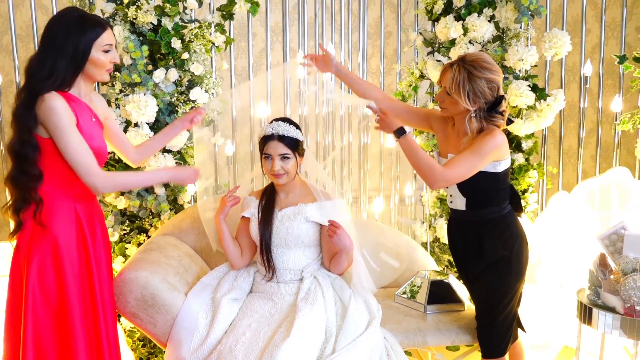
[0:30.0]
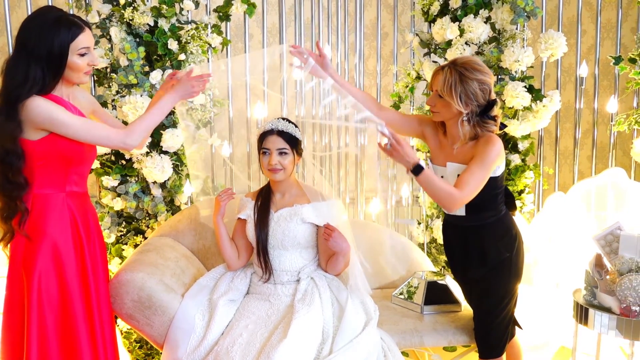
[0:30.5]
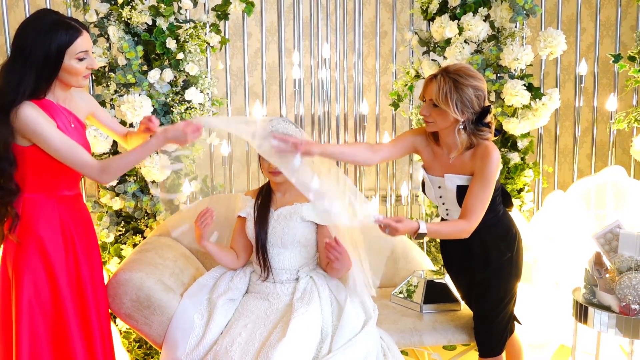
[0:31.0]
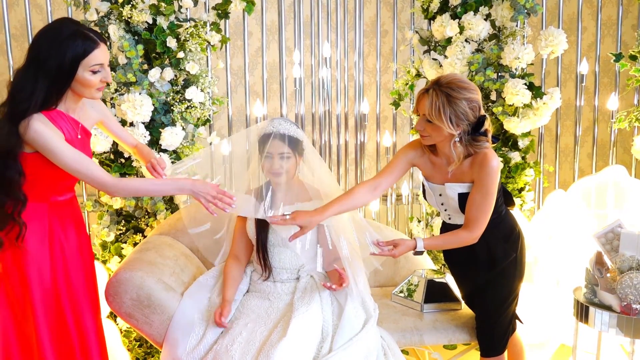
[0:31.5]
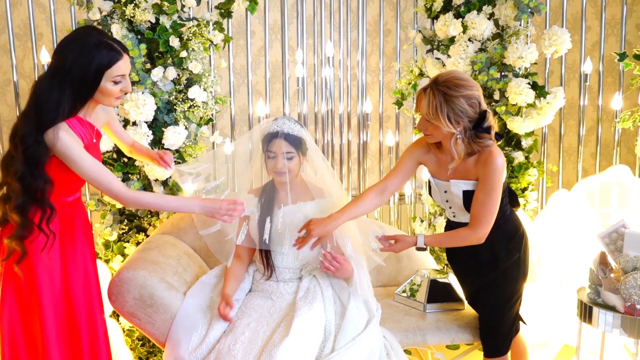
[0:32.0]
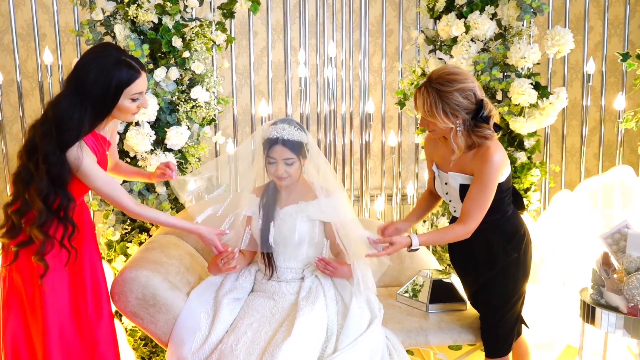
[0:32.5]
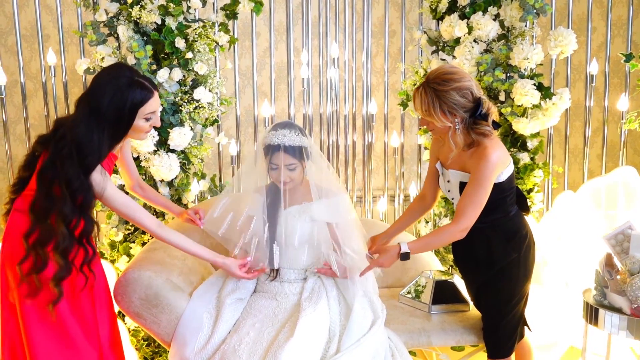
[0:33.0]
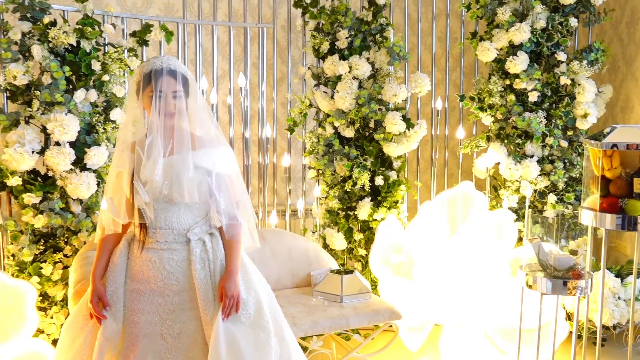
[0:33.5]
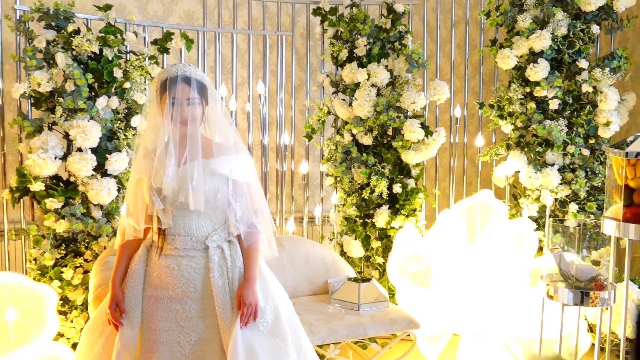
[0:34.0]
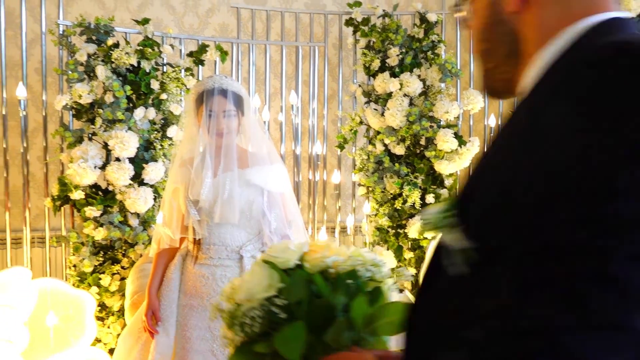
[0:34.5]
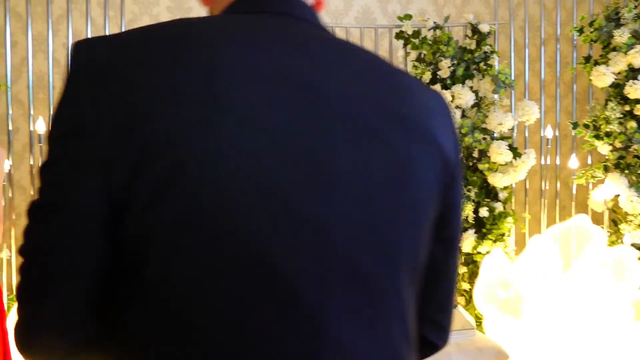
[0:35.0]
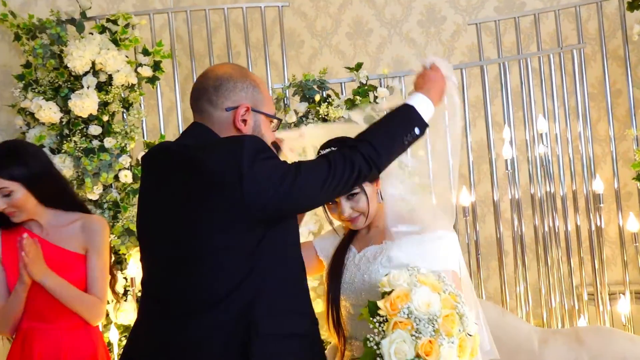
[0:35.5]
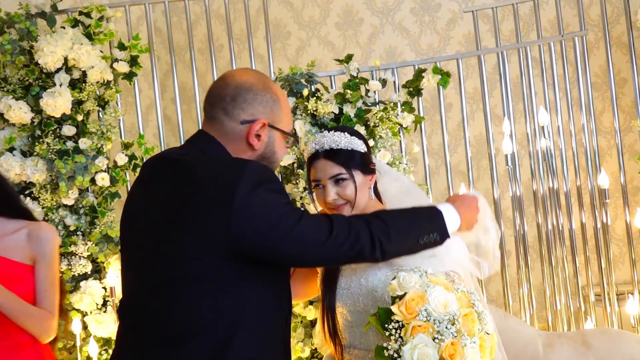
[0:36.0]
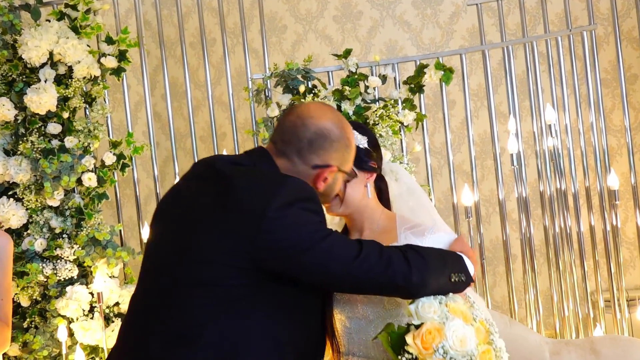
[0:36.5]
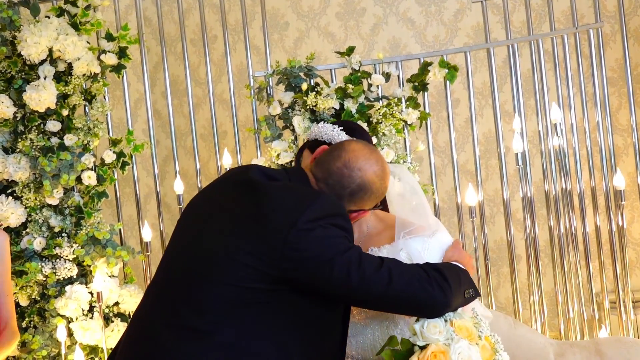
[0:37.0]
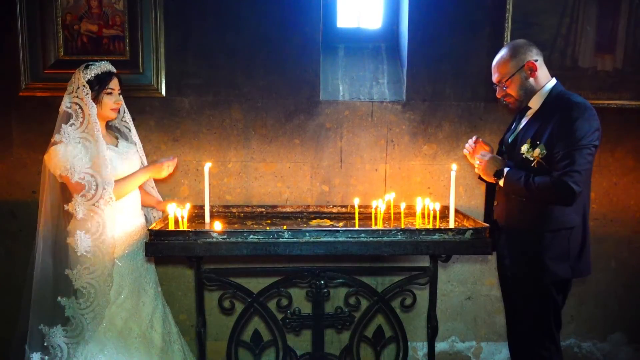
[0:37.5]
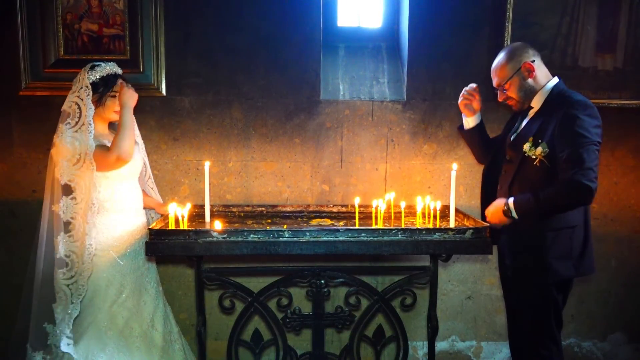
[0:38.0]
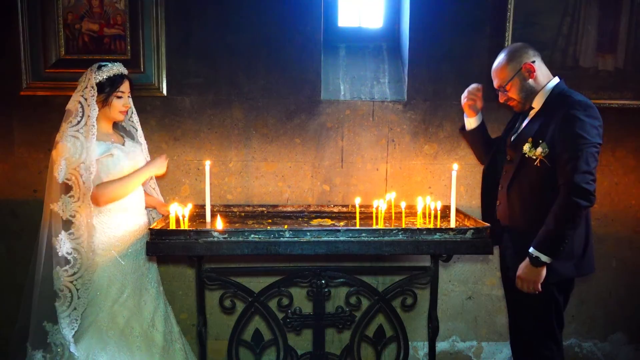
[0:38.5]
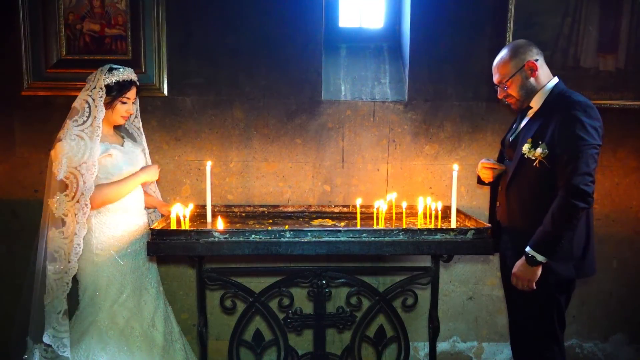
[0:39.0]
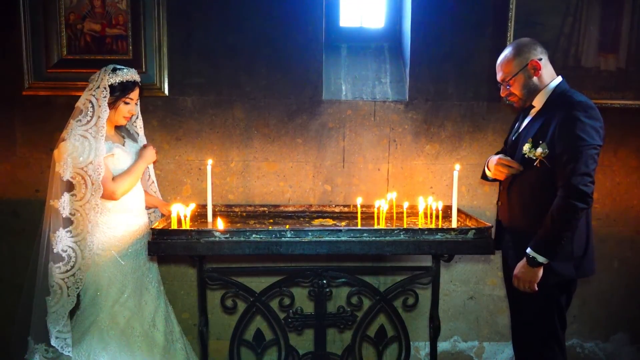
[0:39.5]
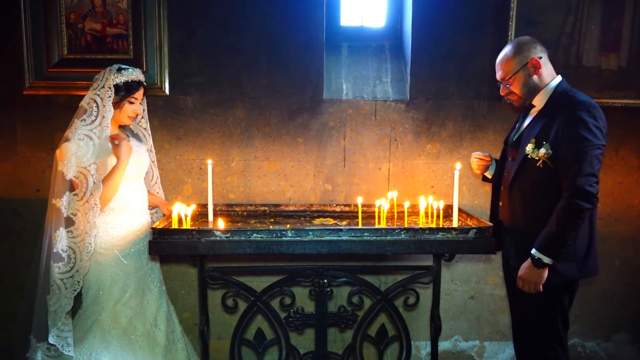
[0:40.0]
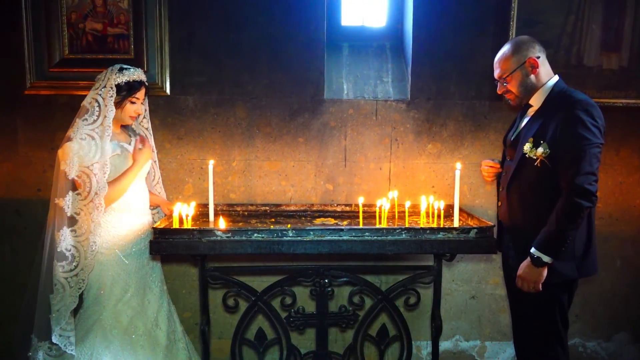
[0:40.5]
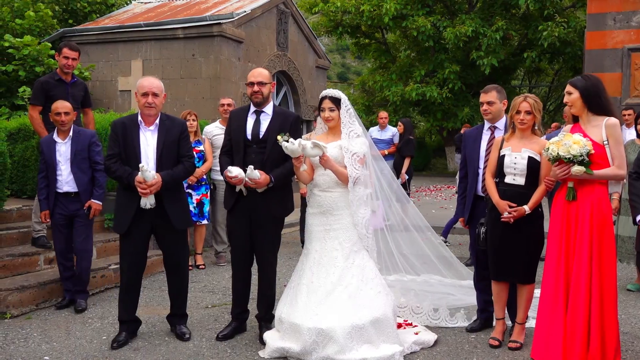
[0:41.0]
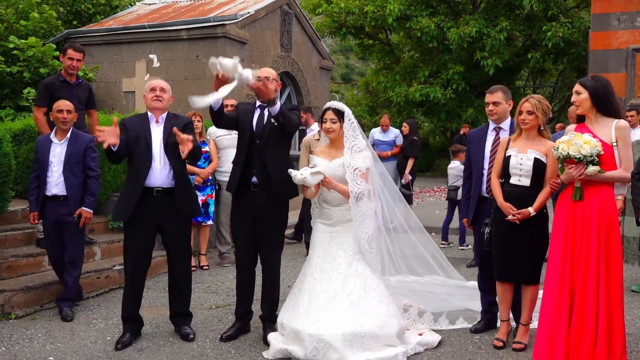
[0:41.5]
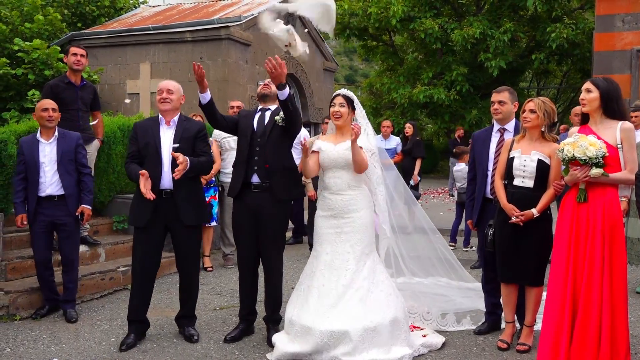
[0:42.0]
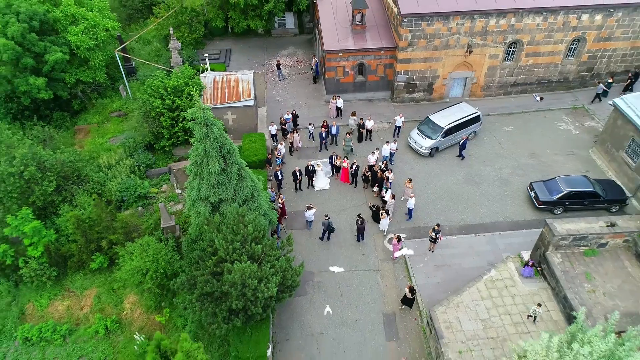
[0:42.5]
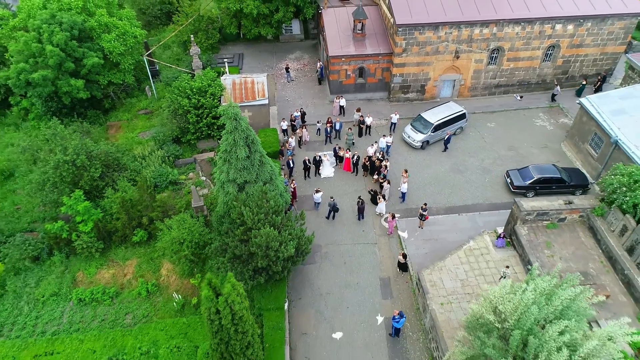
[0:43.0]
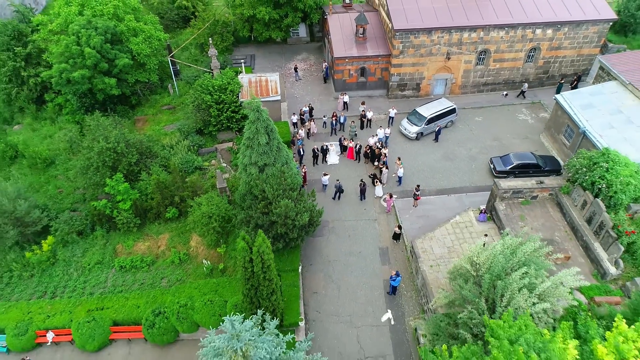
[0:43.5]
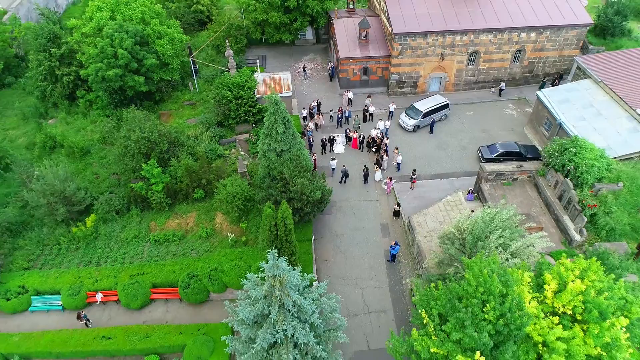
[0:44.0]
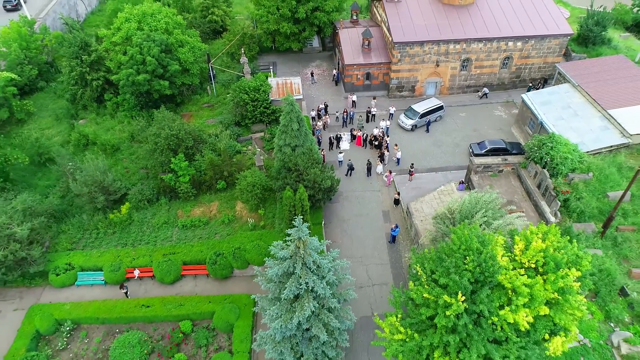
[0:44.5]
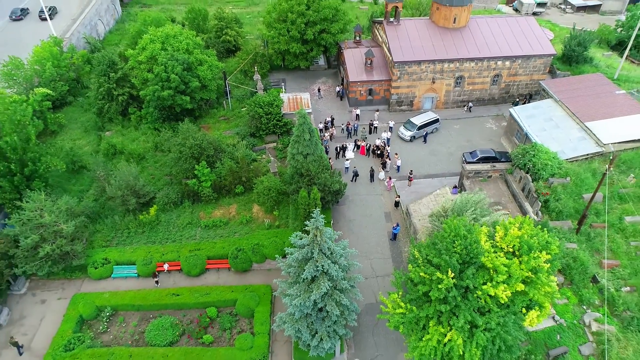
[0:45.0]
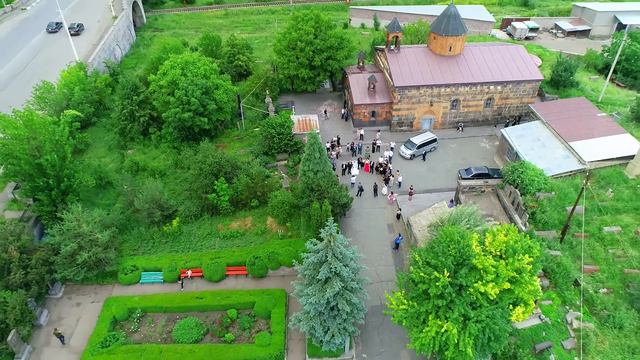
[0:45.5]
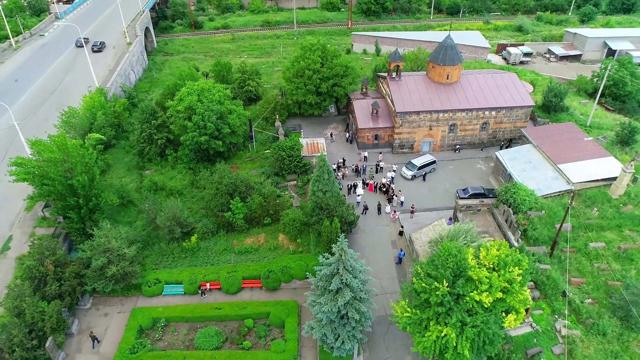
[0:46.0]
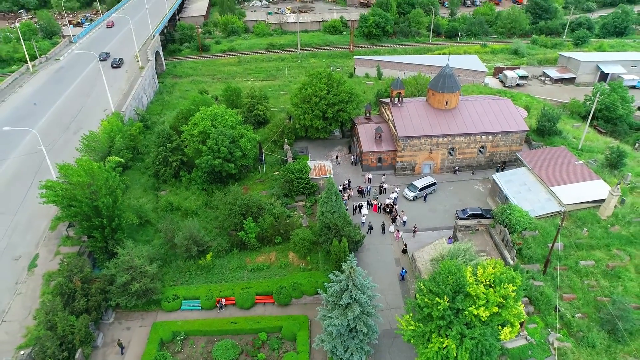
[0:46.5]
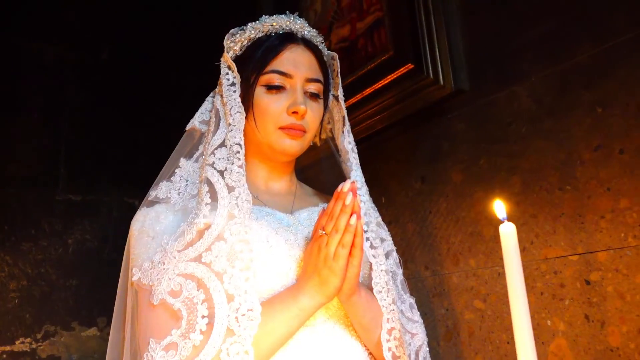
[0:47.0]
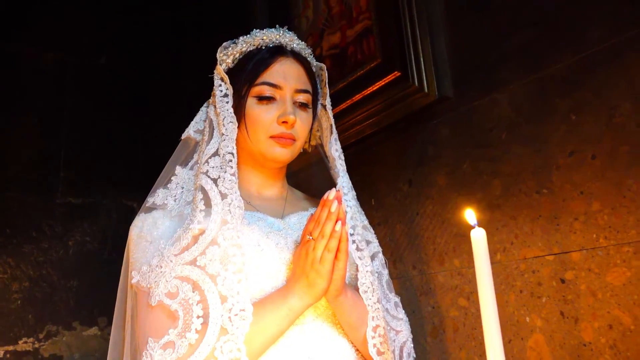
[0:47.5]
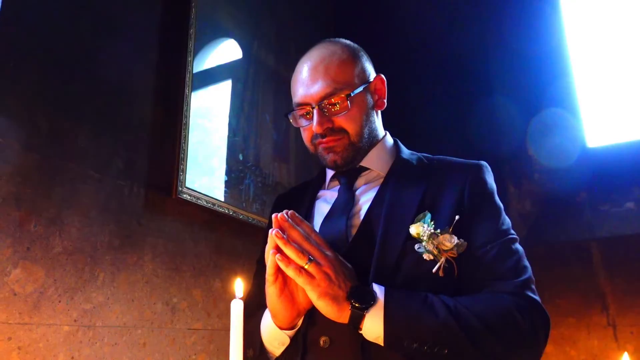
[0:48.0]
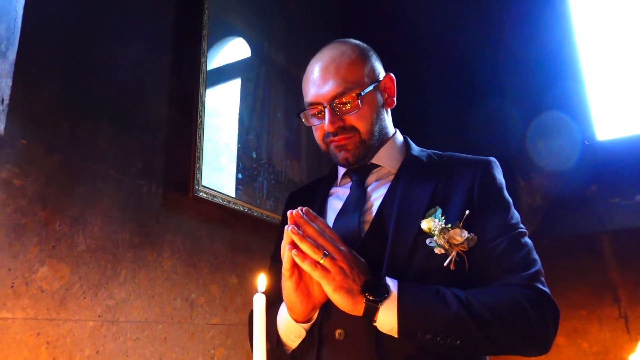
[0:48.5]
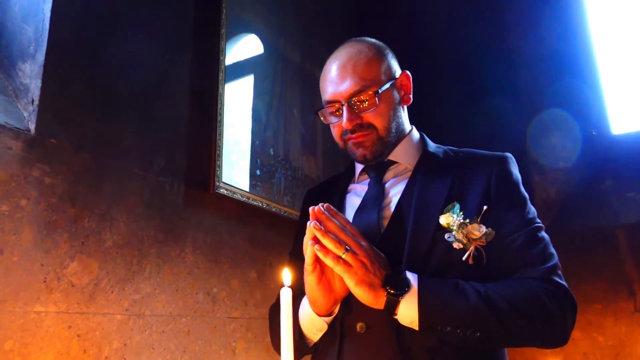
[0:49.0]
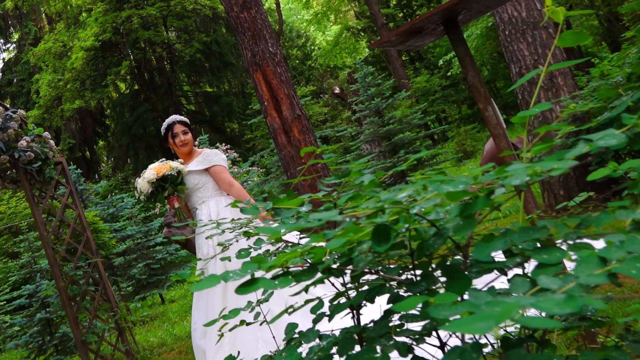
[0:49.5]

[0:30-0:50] Two girls put something on a woman's head that covers her face. The man and the woman then do something unclear. The man comes with a flower, gives it to the lady and kisses her on the neck. After that, a person is in front of some candles, possibly as part of a ritual. Finally, the bride is taking pictures.